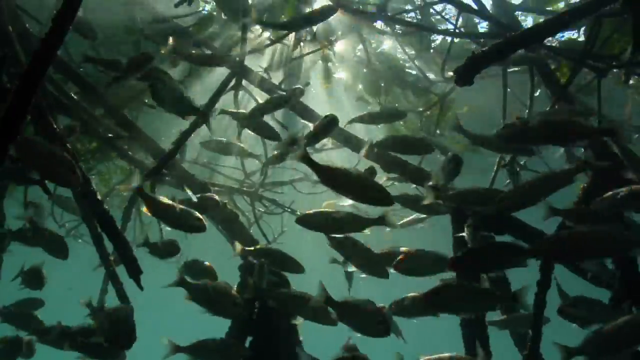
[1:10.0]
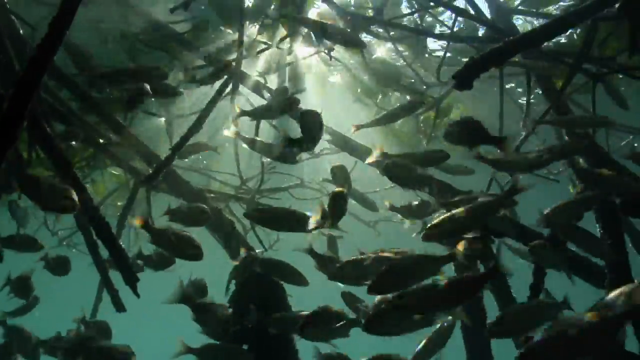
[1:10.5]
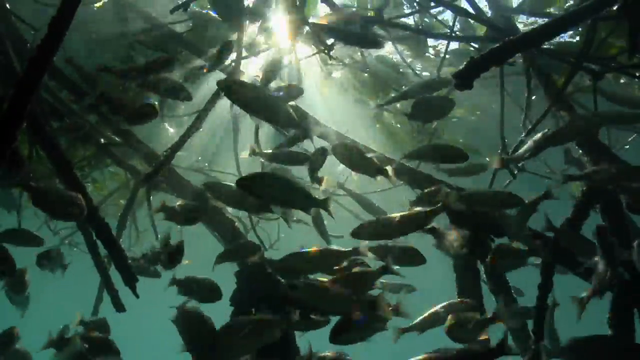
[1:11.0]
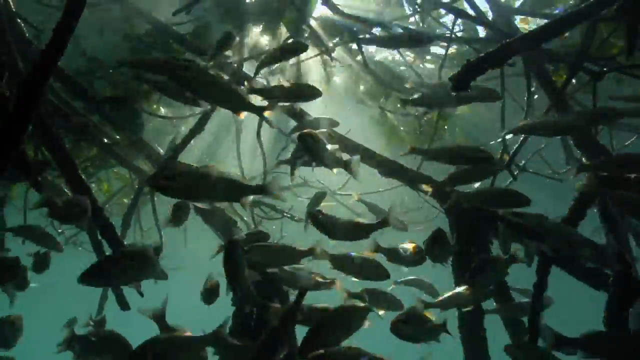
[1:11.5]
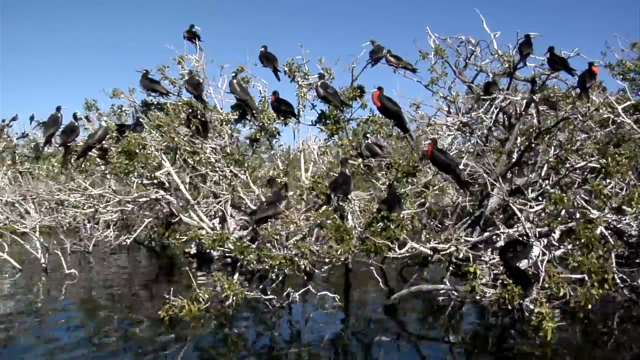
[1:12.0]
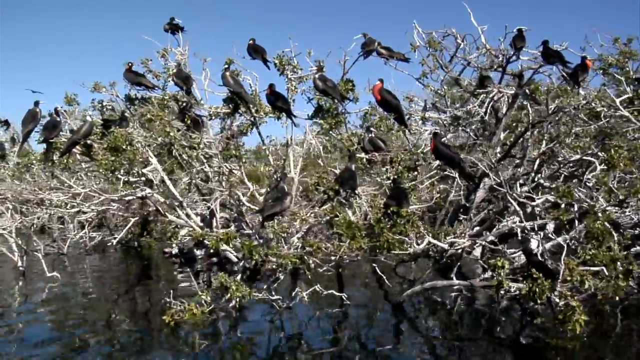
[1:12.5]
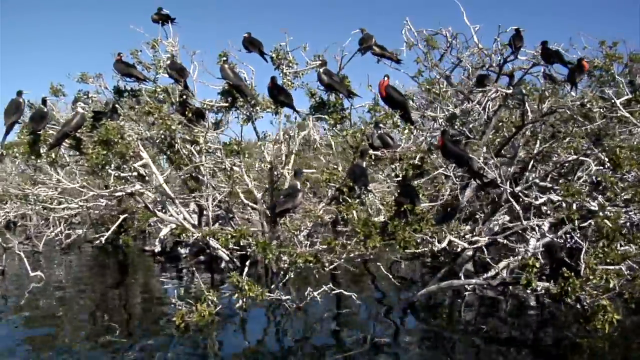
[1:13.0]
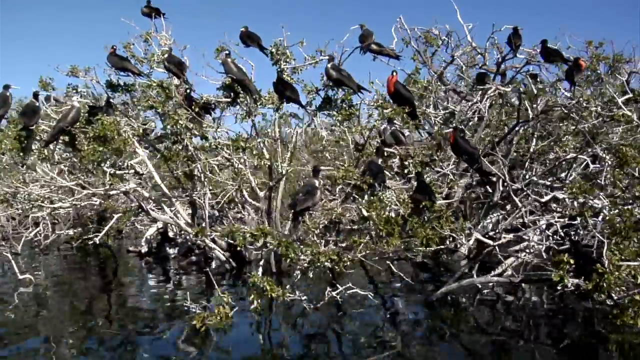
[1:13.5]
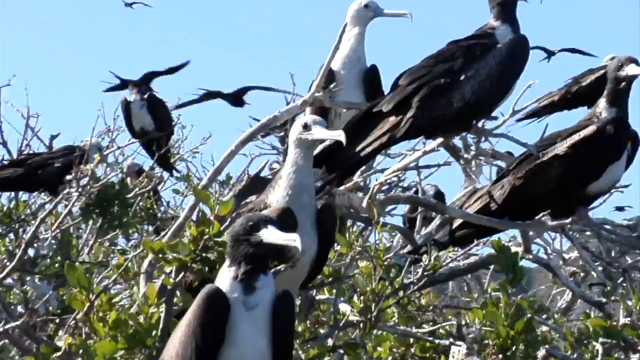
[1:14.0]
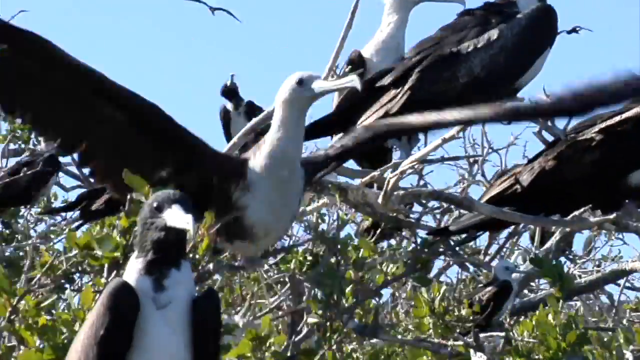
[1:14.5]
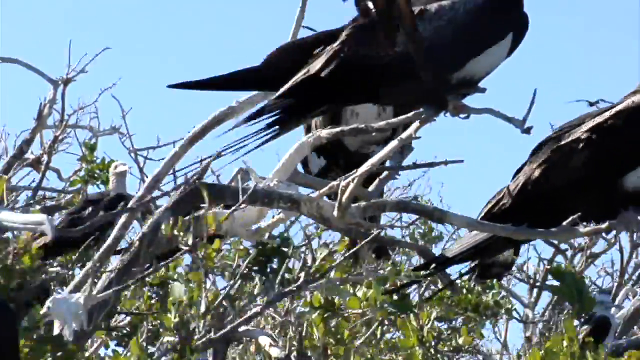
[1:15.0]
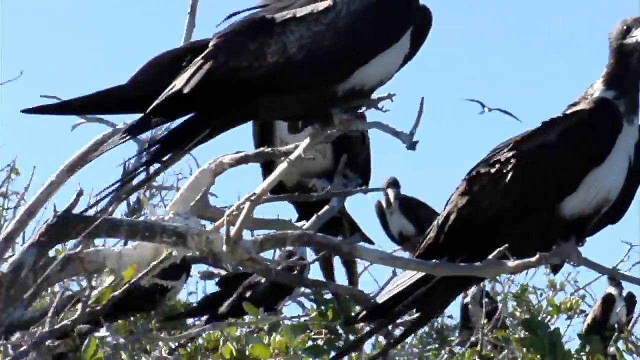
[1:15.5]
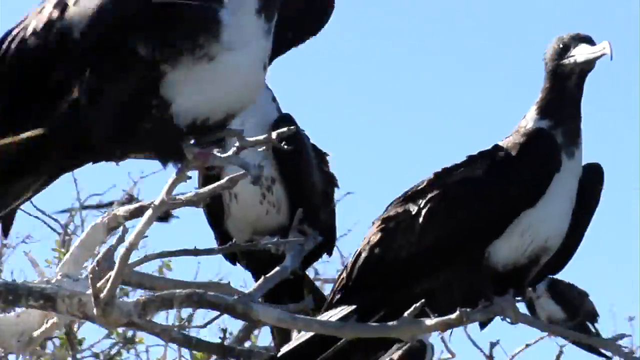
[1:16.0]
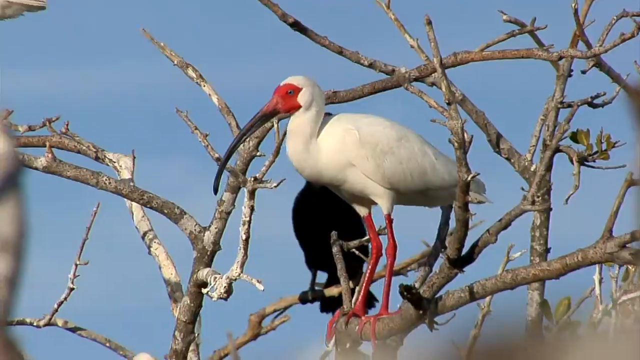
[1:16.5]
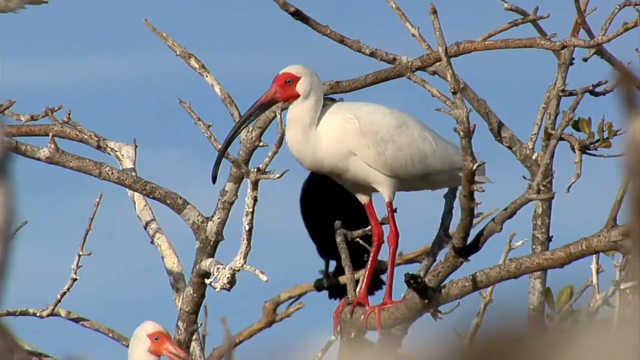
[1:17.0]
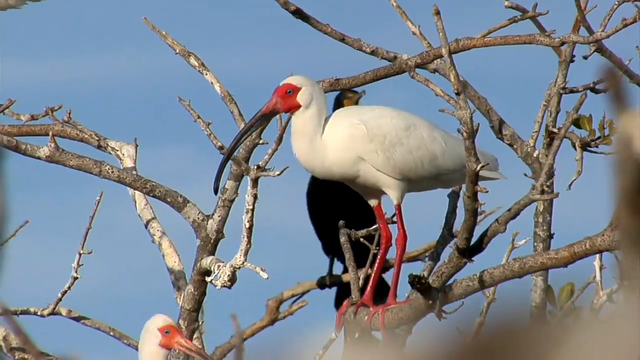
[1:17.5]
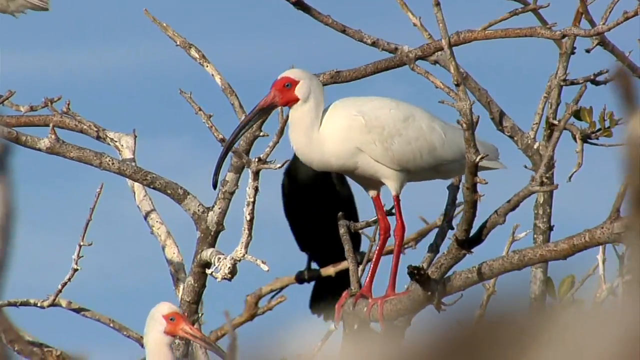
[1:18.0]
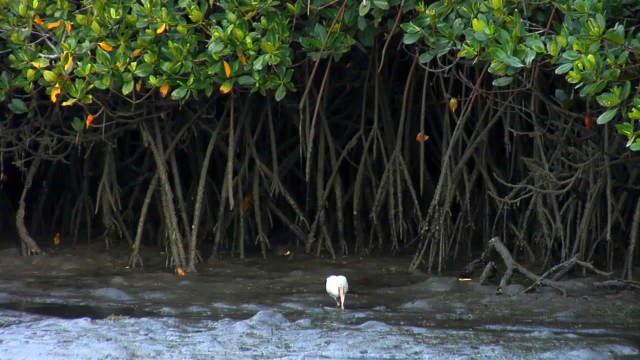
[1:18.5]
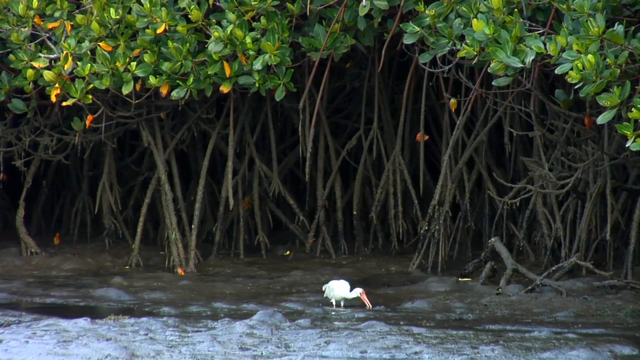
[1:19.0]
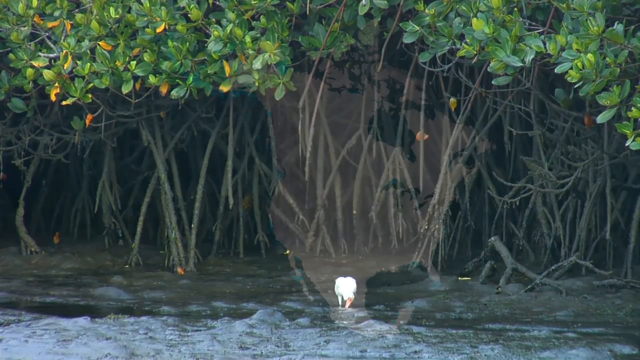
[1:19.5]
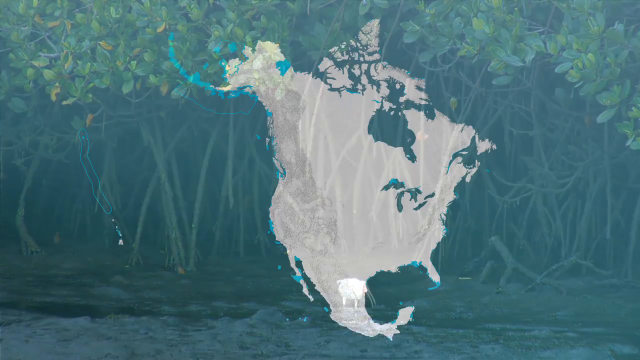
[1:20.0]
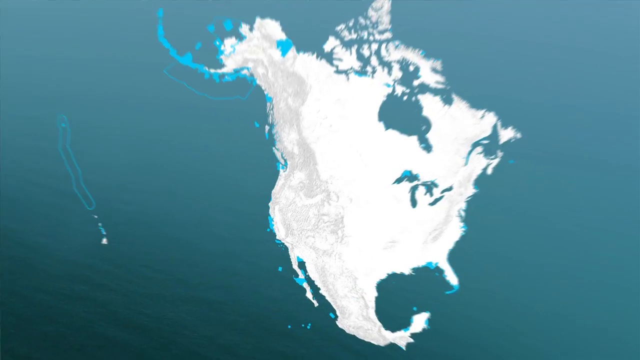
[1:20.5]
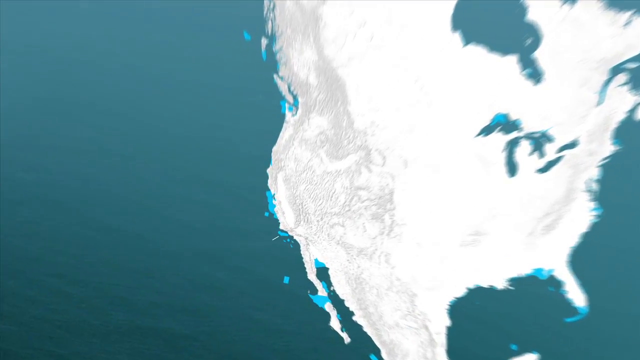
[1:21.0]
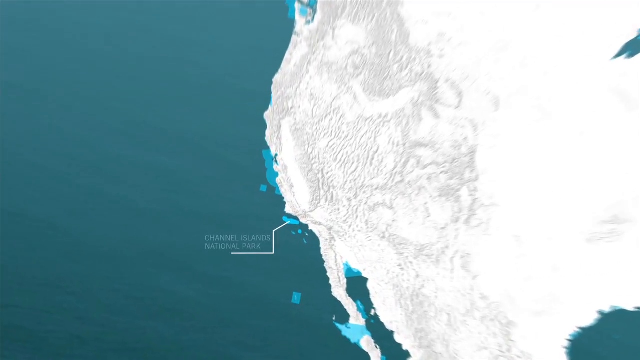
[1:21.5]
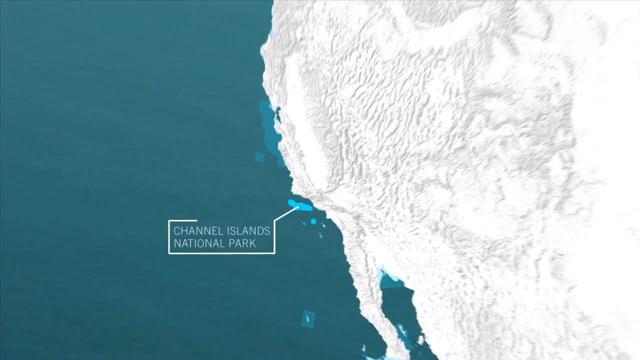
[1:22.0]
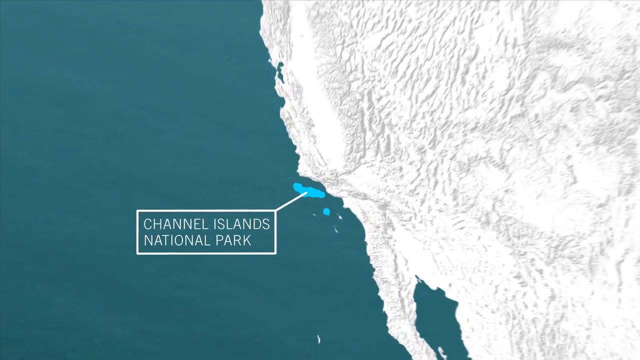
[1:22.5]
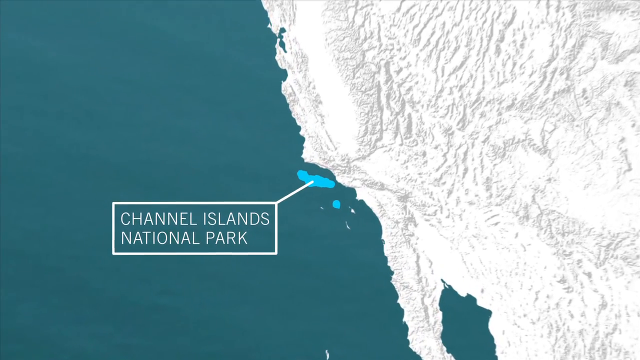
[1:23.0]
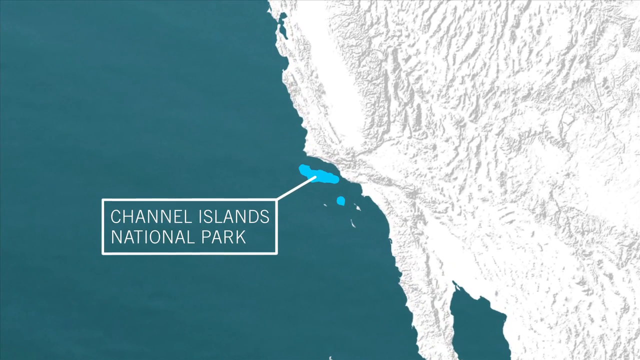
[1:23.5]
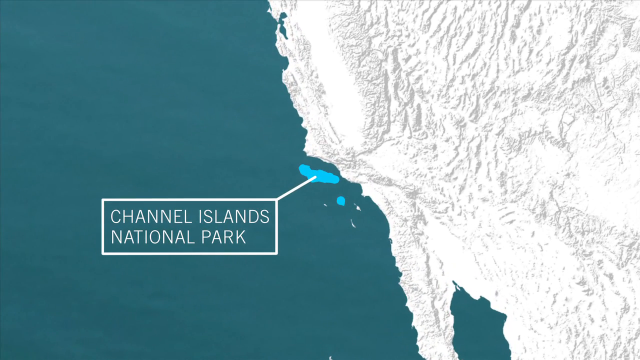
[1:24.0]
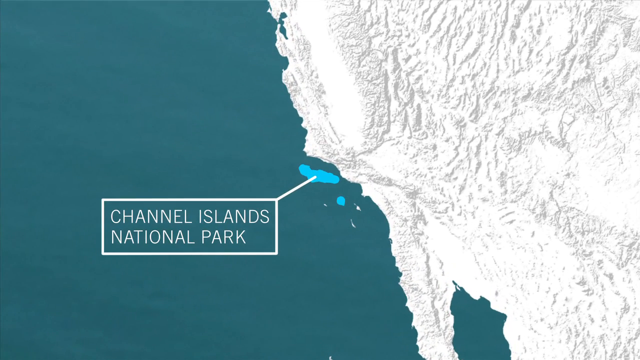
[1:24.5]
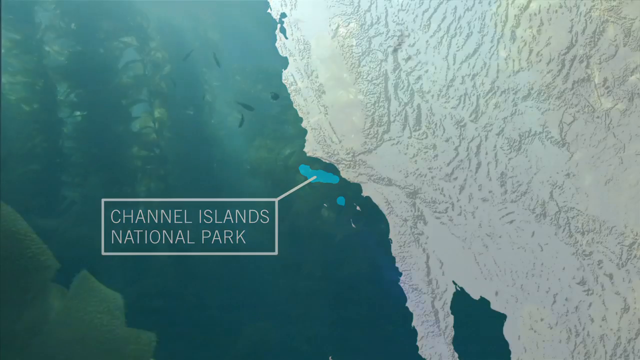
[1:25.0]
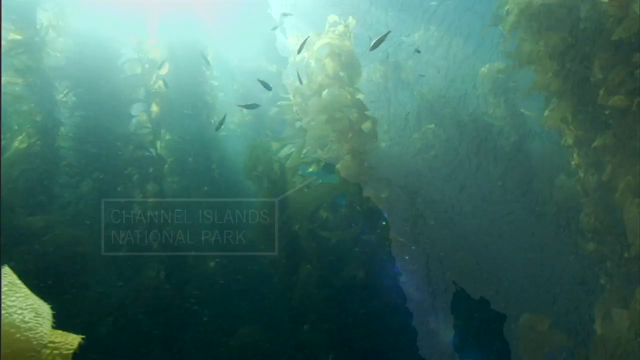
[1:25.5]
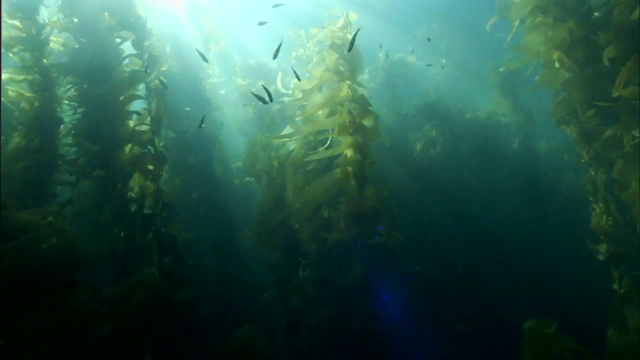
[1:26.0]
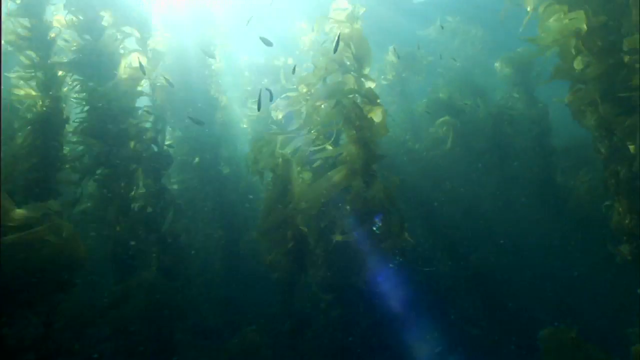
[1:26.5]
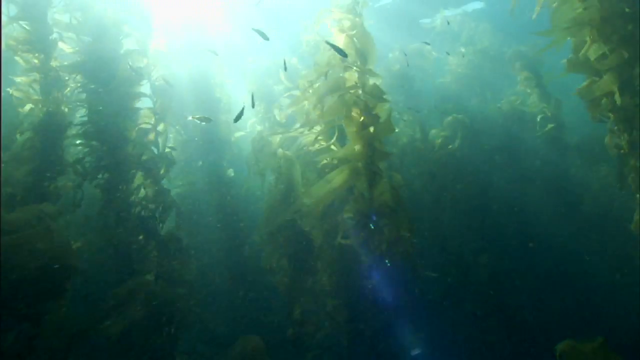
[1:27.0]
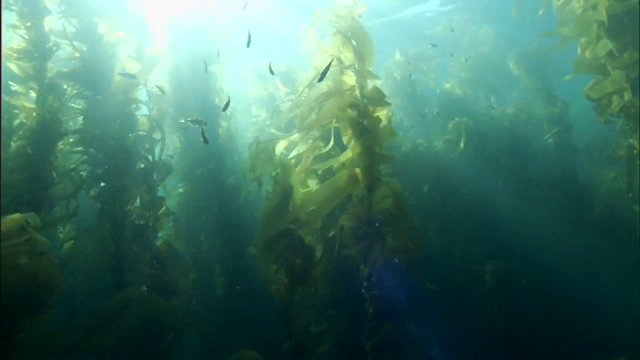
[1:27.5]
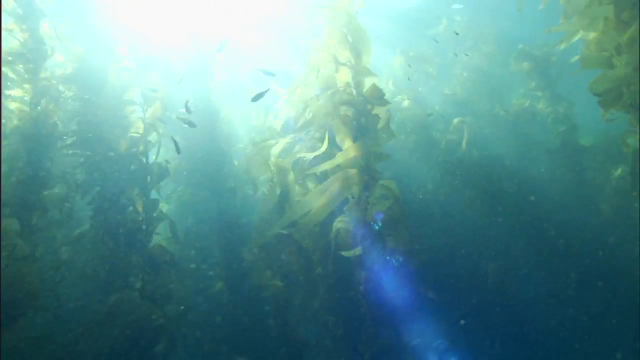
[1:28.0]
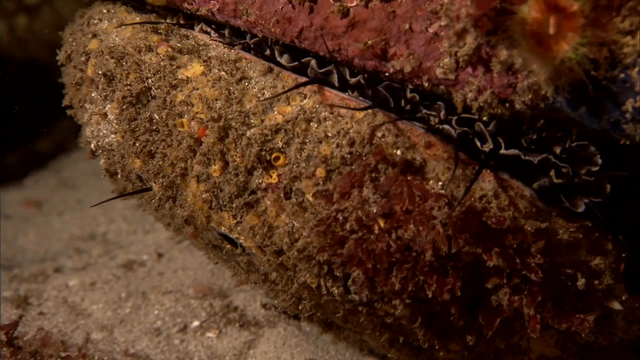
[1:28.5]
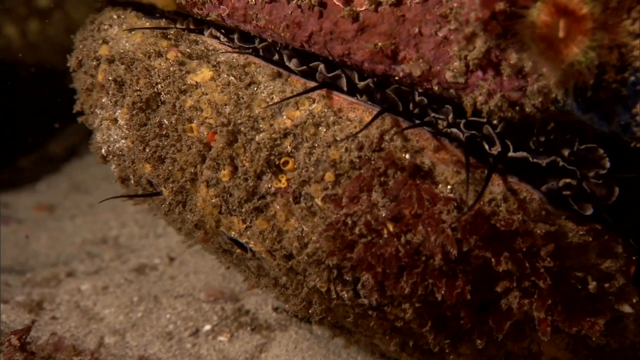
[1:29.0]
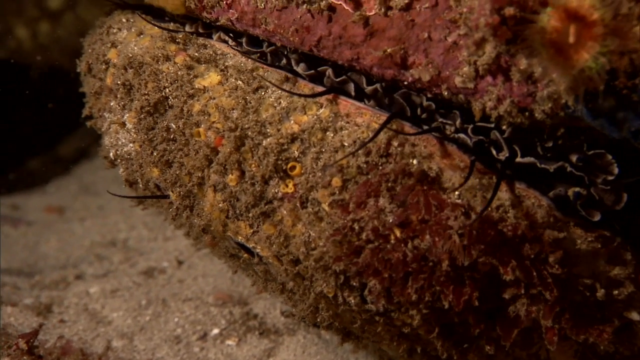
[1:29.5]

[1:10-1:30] Another very large school of fish is directly under a grove of trees, swimming between the roots. Other trees appear, with a bunch of different birds landing and resting, including seagulls, other birds with red faces and red legs, and a white stork of some sort trying to get food. The map of America then zooms into a different place, Channel Islands National Park. Footage of the park shows what may be seaweed, with little fish swimming between it, and sun rays shining through the water. An unidentified organism that looks like a rock, all fuzzy and very weird-looking, has little spiky-looking feet or tentacles sticking out.